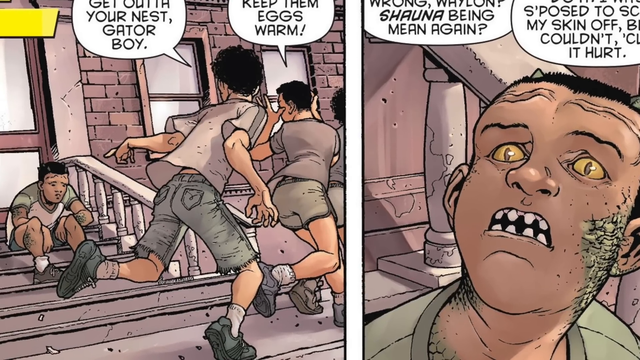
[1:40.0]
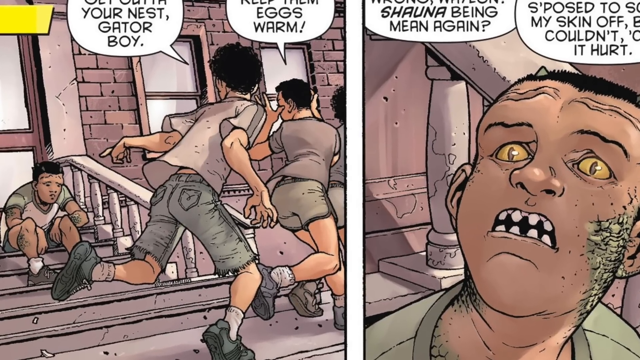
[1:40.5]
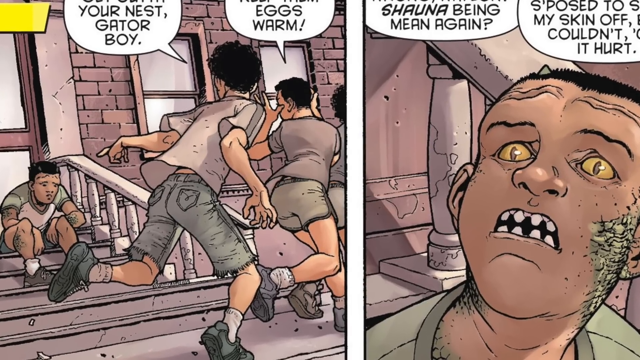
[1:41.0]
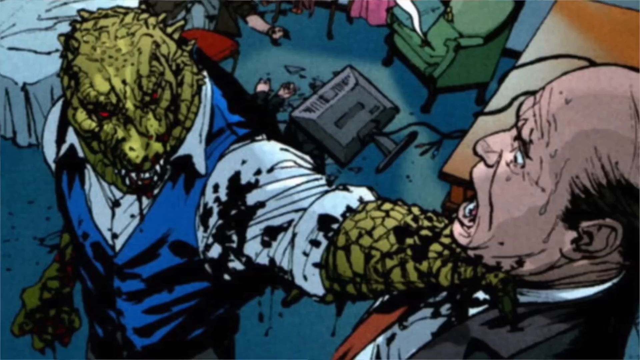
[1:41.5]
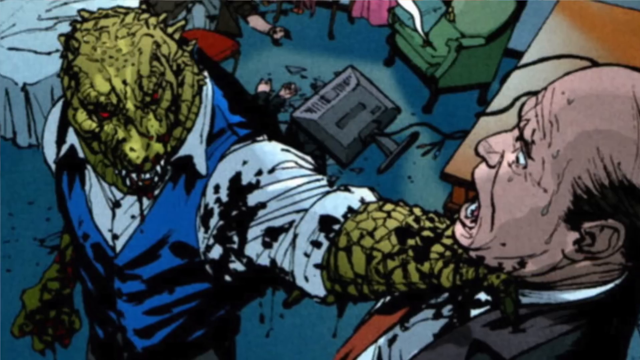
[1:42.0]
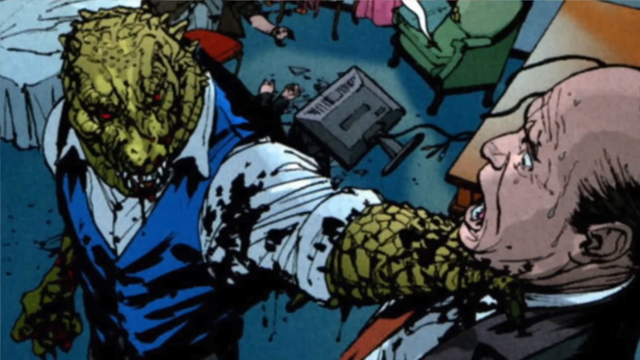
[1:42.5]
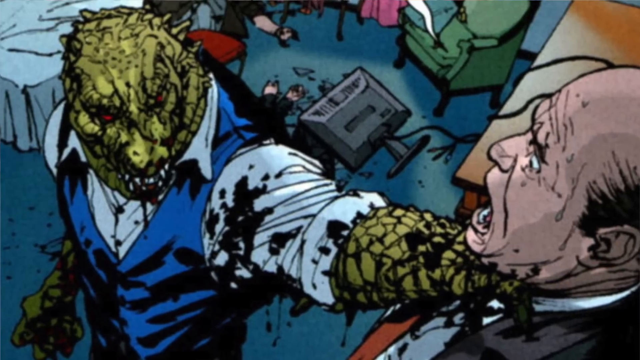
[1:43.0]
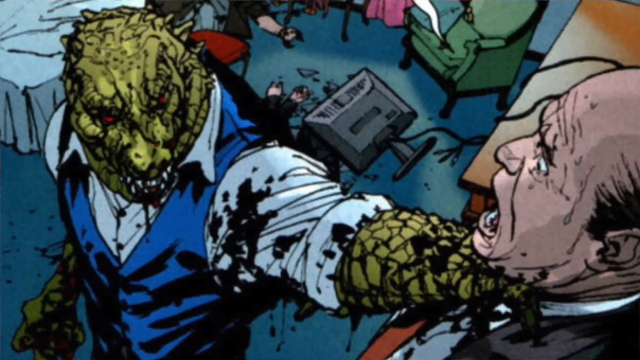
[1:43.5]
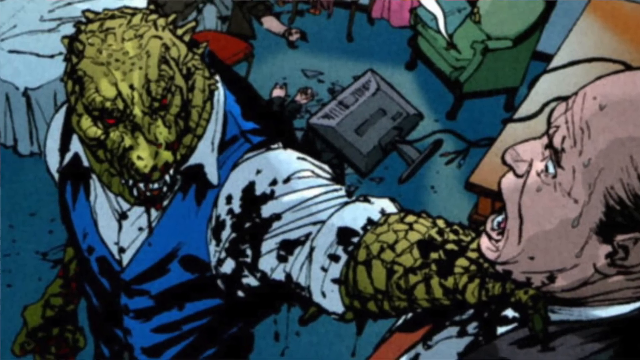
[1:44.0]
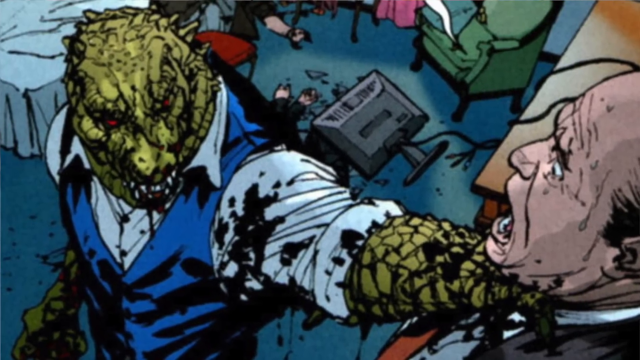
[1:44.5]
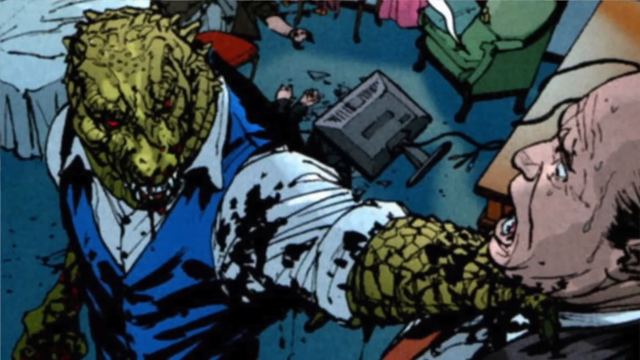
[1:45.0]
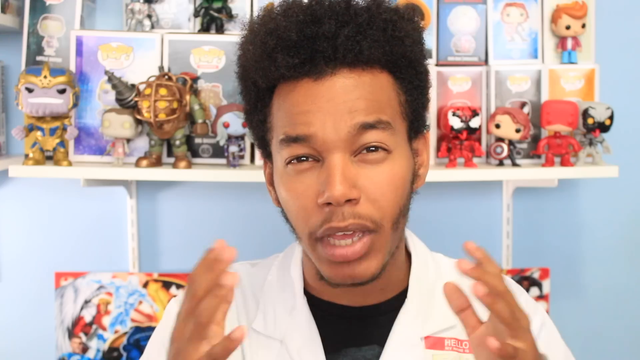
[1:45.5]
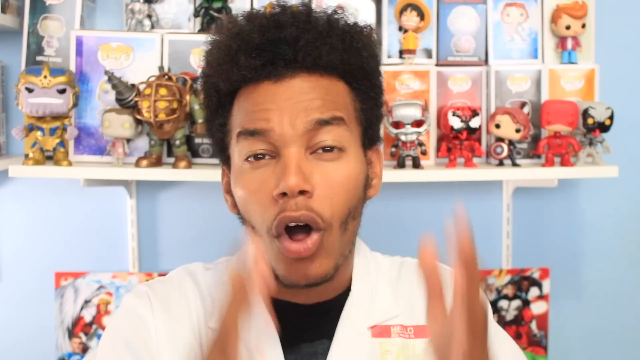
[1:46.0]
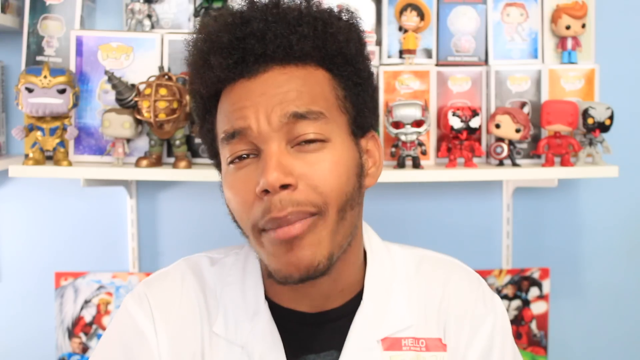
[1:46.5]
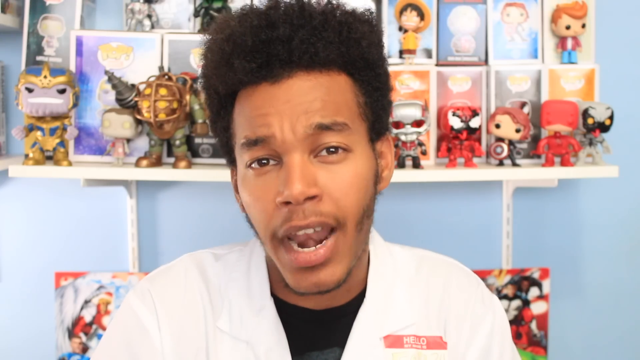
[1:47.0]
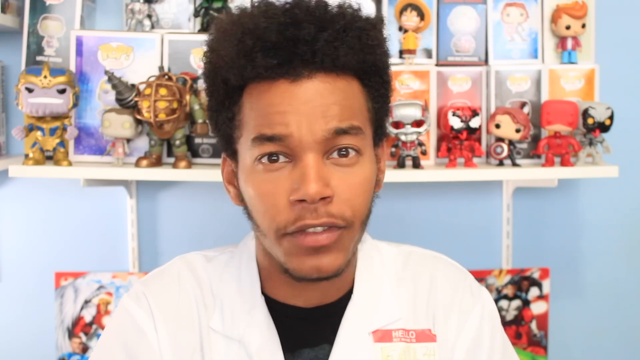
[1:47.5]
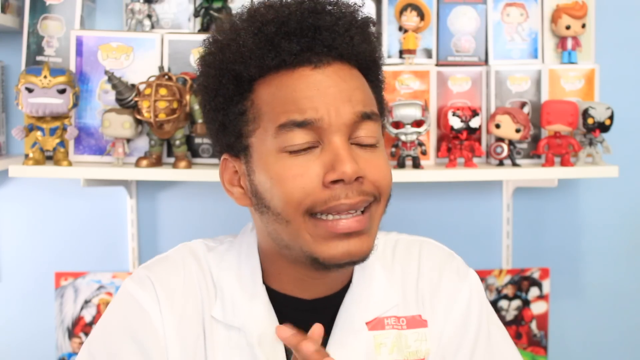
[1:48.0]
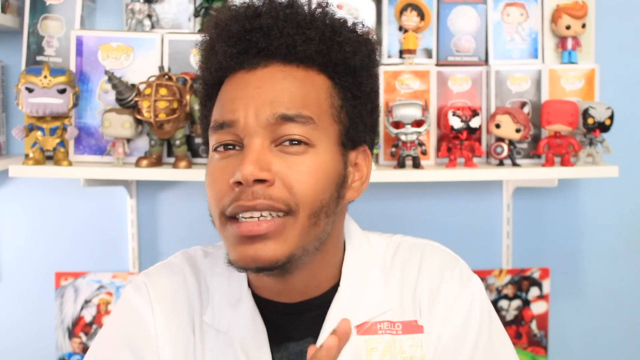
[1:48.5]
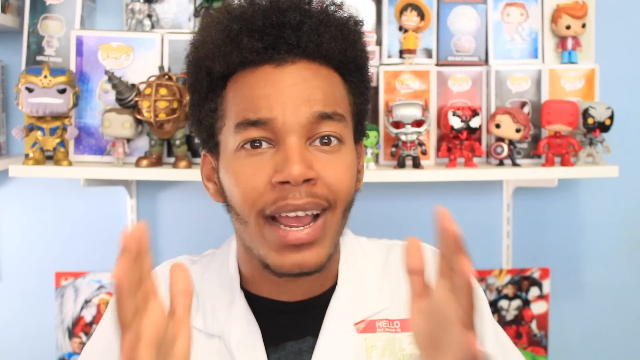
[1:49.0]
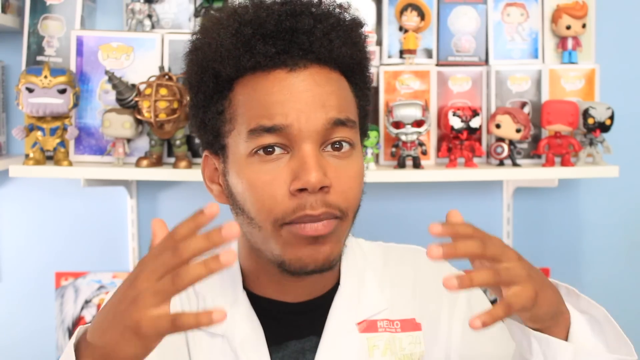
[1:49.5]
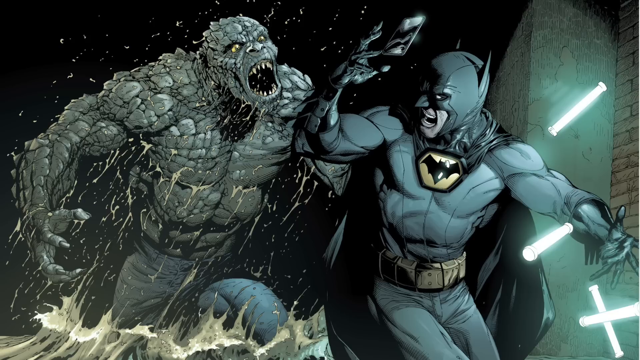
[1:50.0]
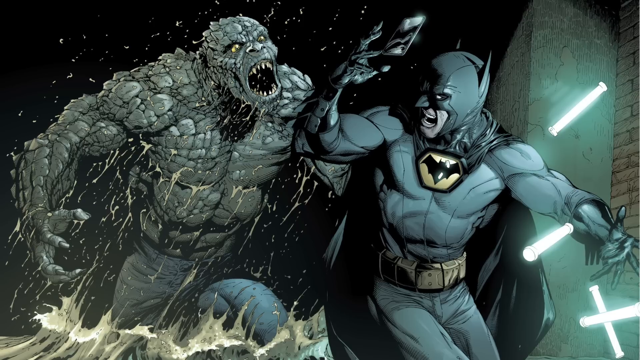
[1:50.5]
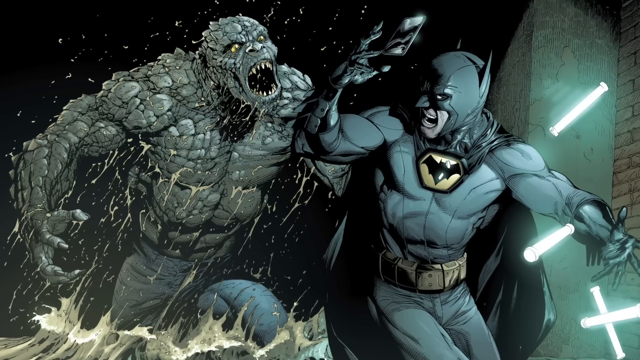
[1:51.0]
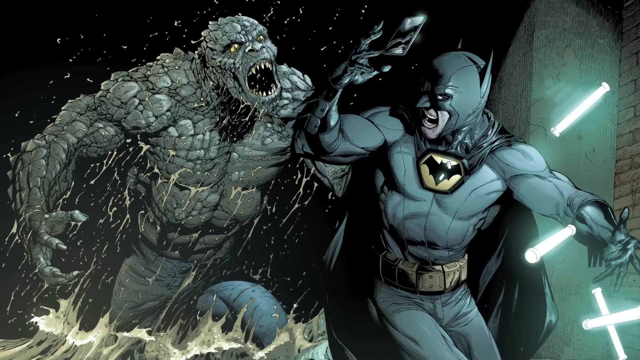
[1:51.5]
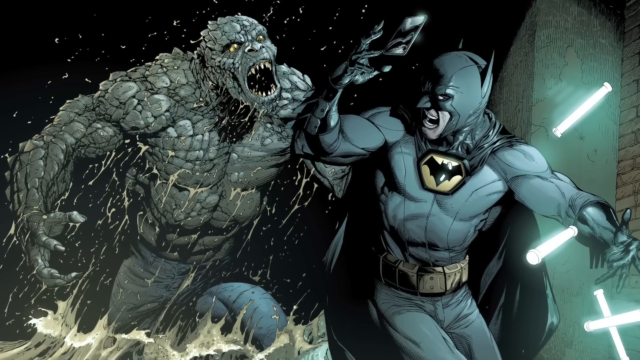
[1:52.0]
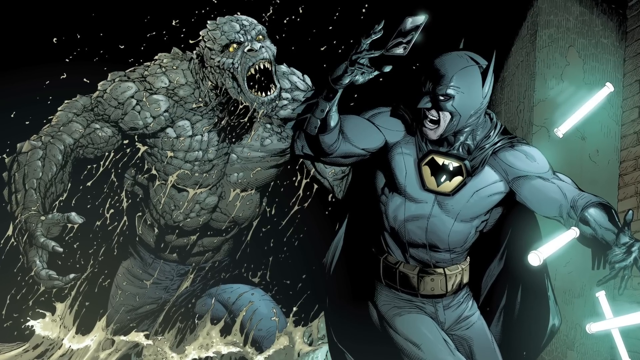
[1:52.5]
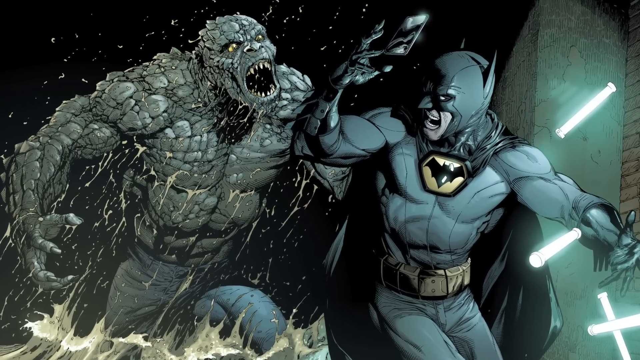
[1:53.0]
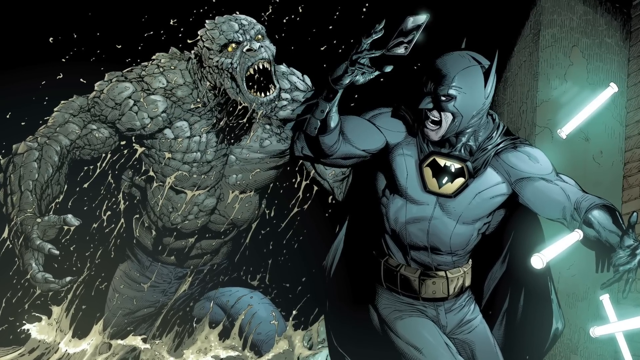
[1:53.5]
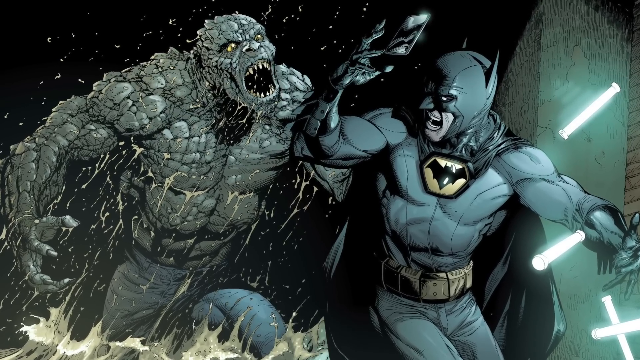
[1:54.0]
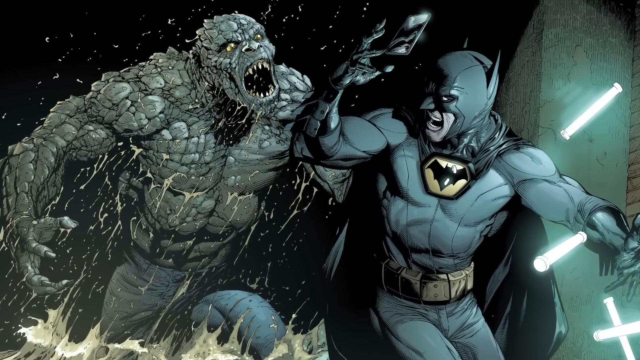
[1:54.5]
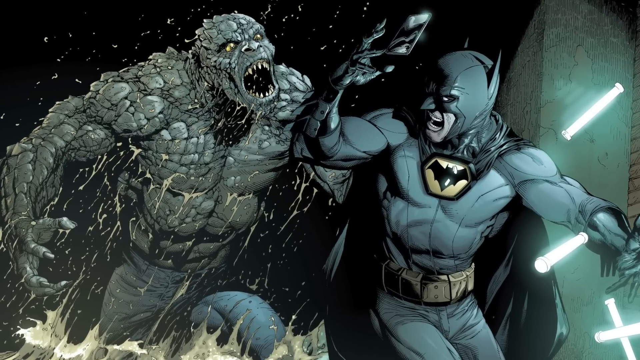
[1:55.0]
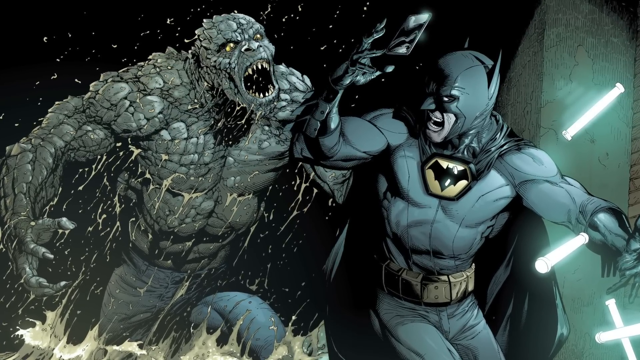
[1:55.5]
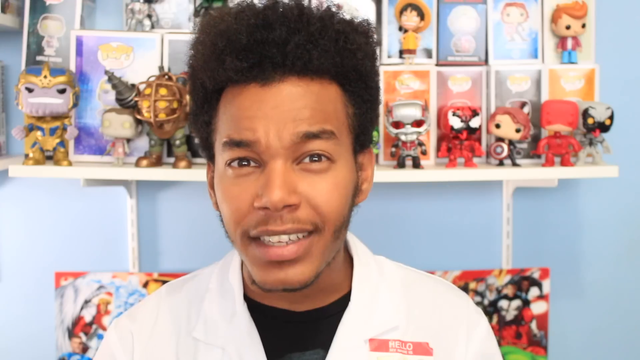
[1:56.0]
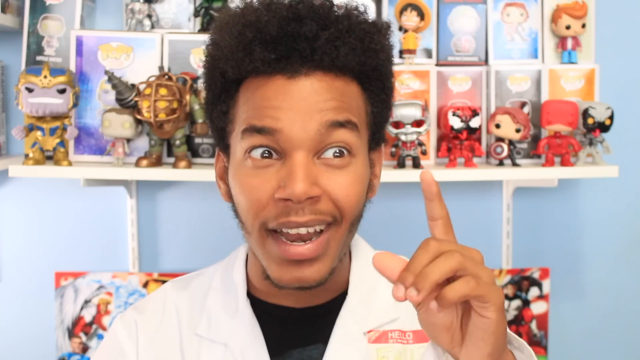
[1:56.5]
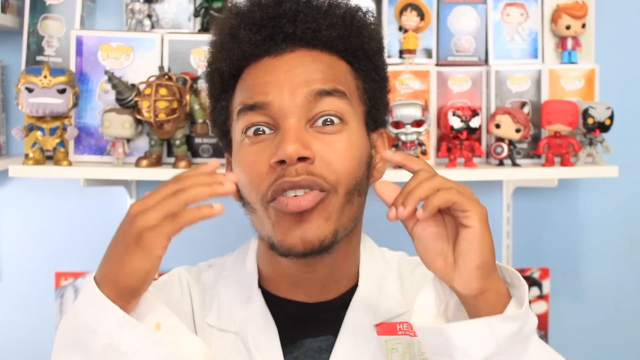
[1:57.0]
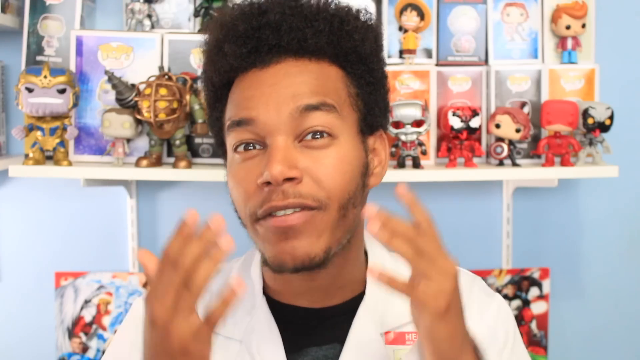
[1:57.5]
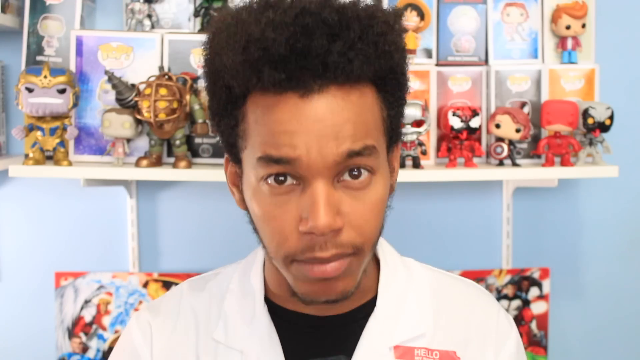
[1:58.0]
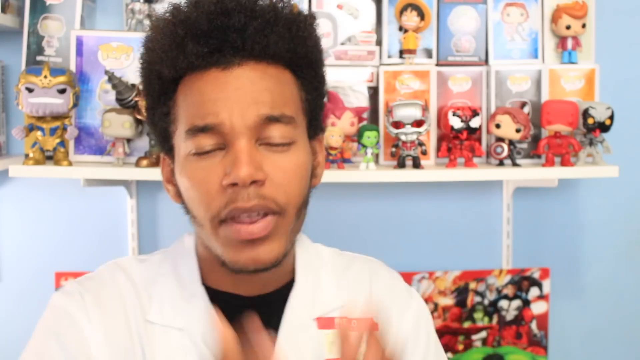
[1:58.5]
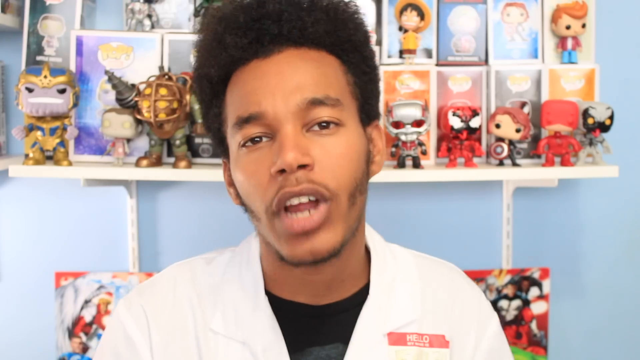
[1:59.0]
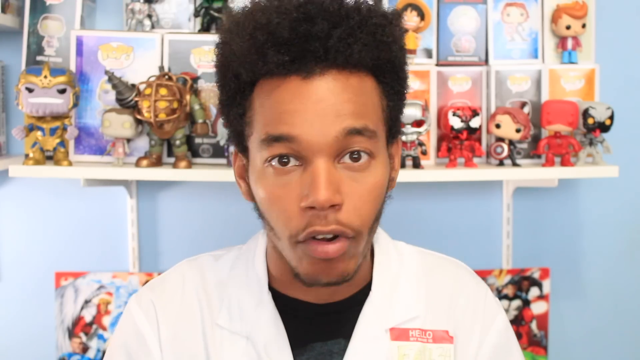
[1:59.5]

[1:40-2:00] A split screen is shown. On the left, a boy sits on the stairs of a face-brick house with visible windows, while other boys run and look at him, seeming to say something. Words are written at the top of the screen, apparently directed at the seated boy, and there is a yellow strip in the top left corner. On the right, a boy who appears to have a patch on his face has his mouth open, showing his teeth; he appears to be in shock and seems hurt, with a sad face. Words above him read "Shona is being mean again". Behind him is the wall of a house, and a pole is visible.